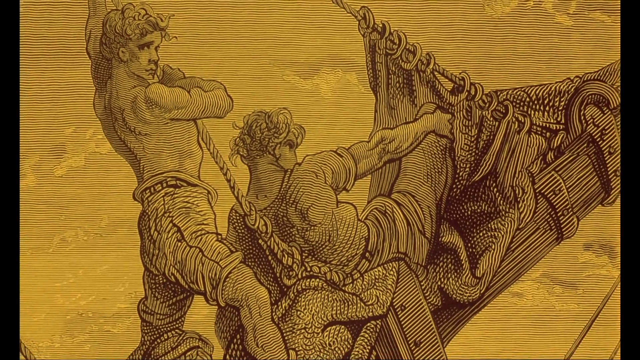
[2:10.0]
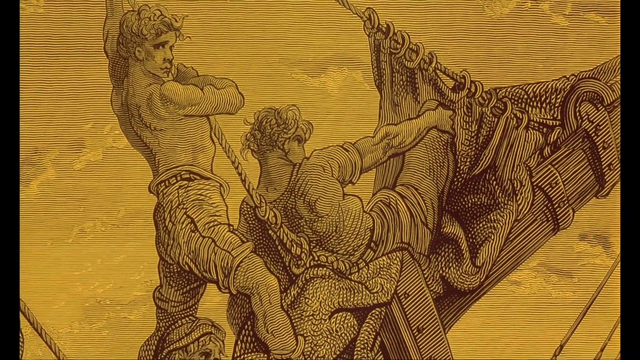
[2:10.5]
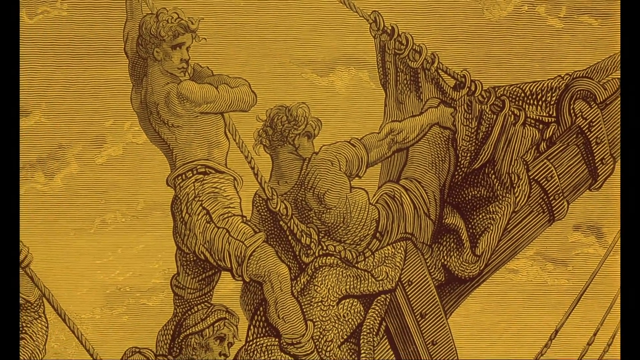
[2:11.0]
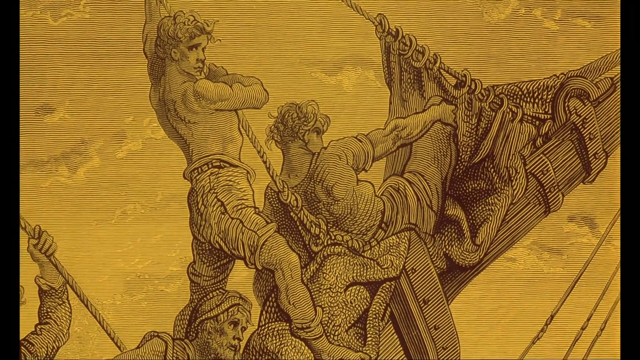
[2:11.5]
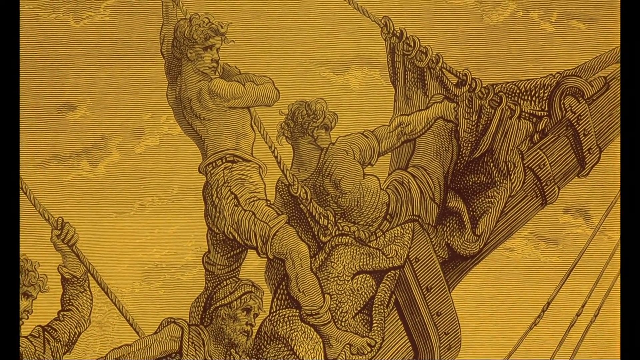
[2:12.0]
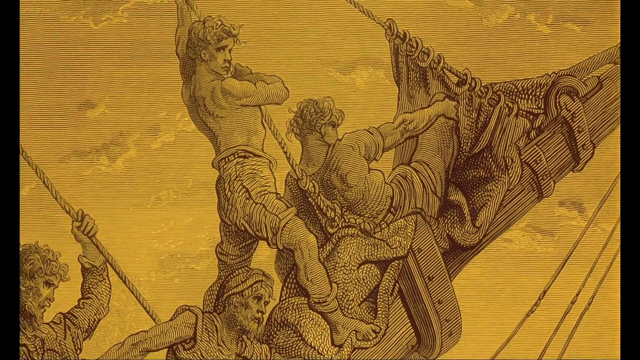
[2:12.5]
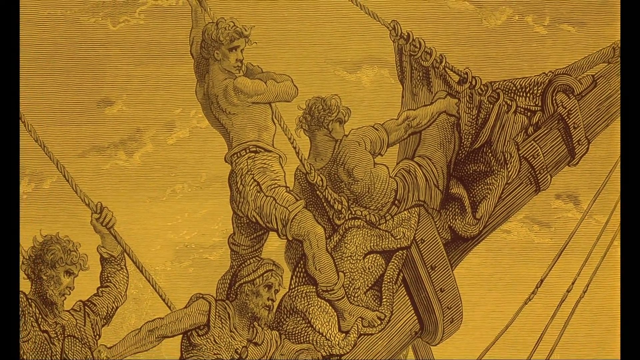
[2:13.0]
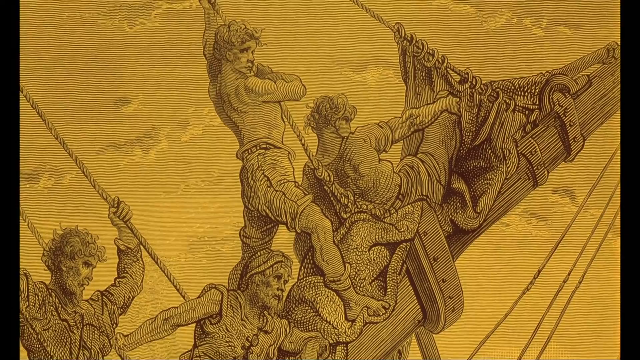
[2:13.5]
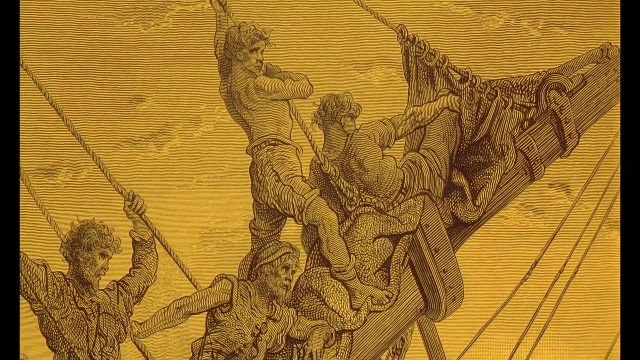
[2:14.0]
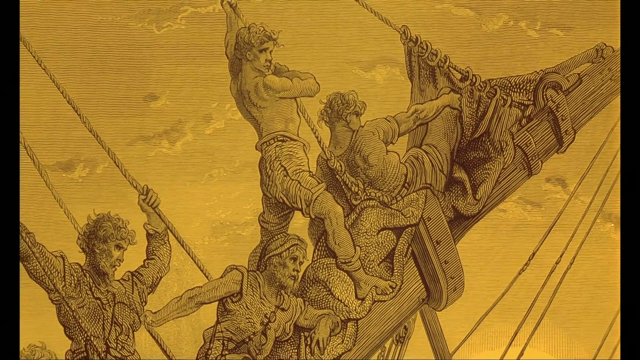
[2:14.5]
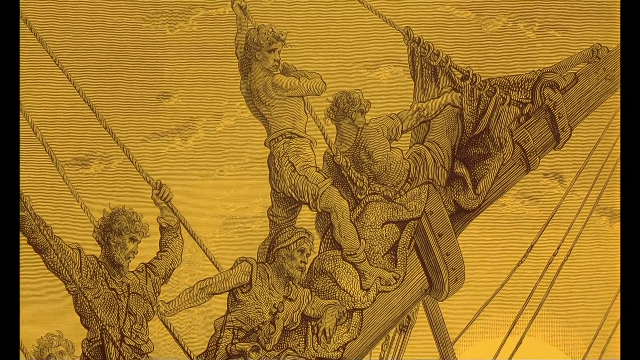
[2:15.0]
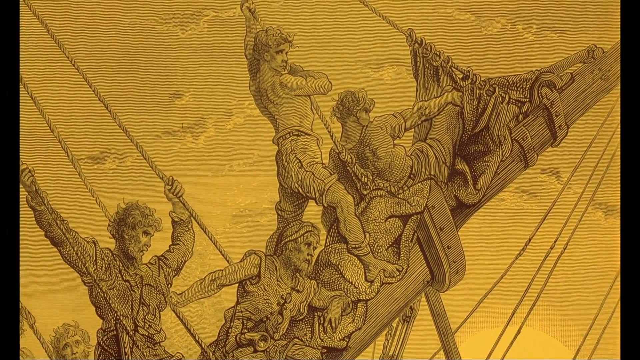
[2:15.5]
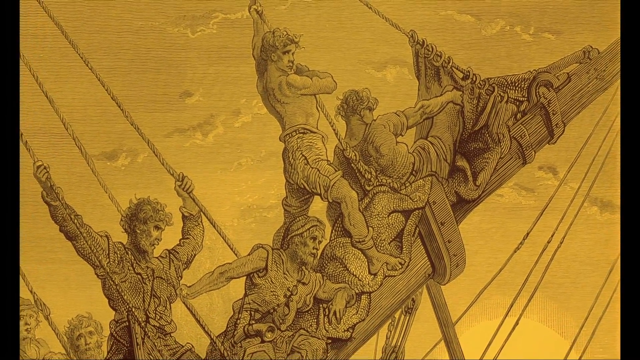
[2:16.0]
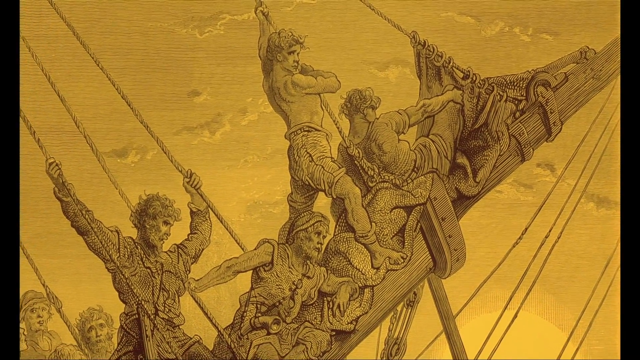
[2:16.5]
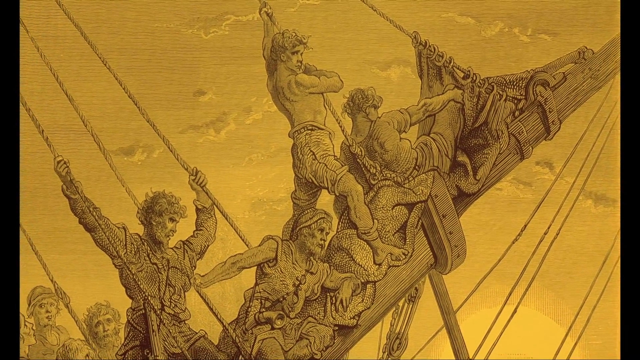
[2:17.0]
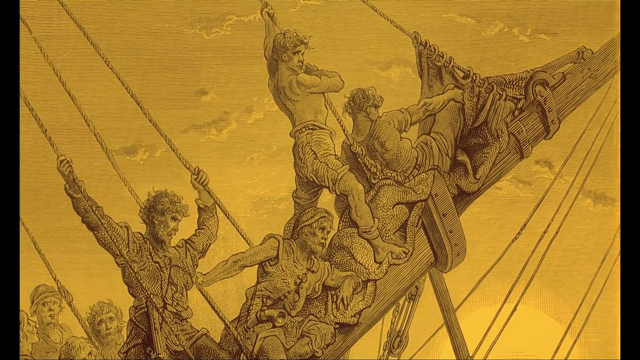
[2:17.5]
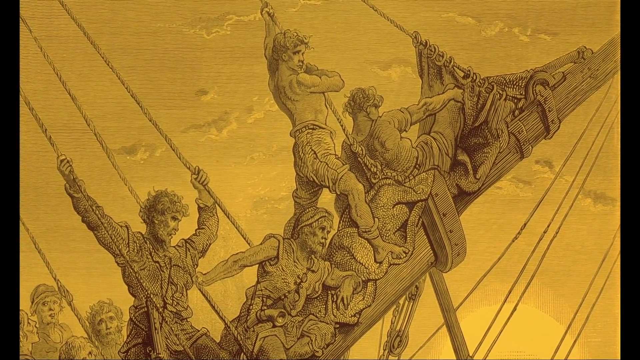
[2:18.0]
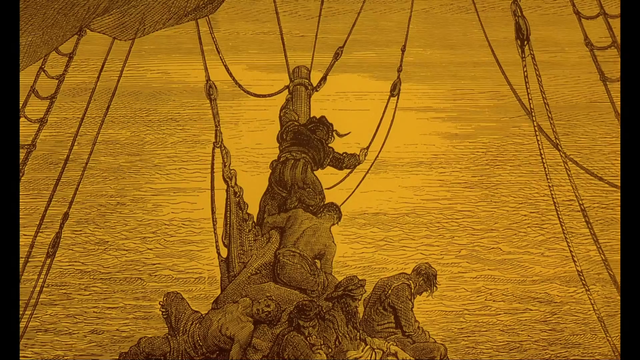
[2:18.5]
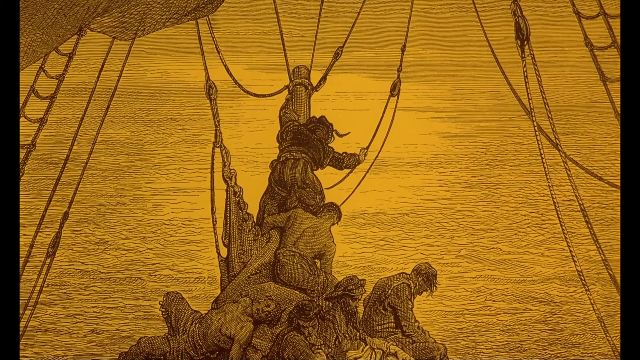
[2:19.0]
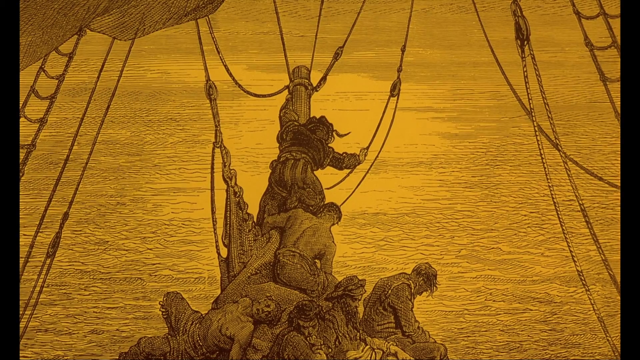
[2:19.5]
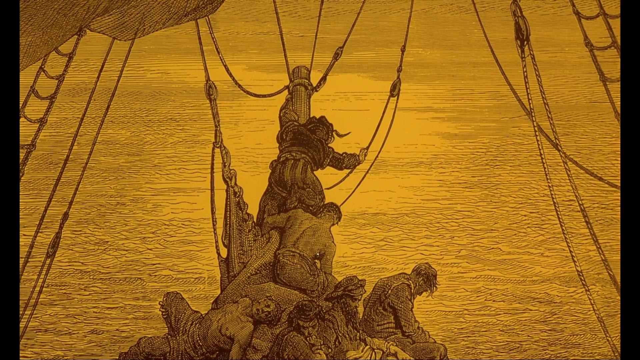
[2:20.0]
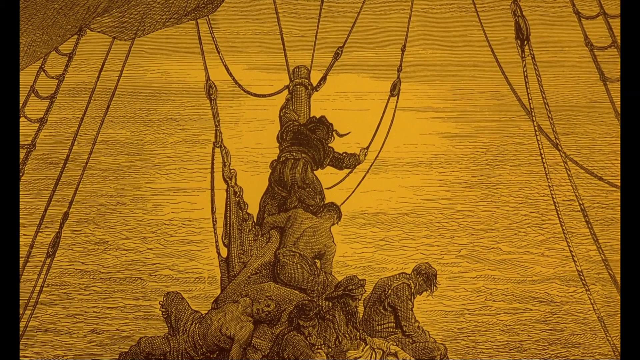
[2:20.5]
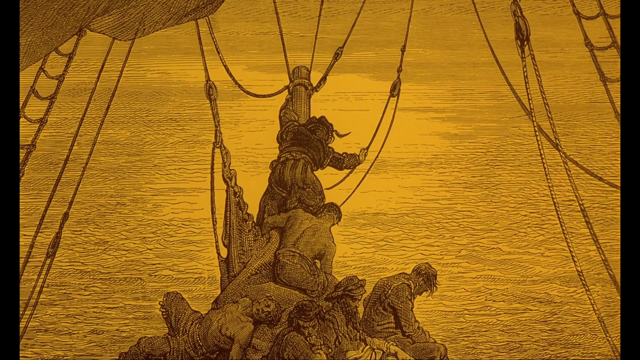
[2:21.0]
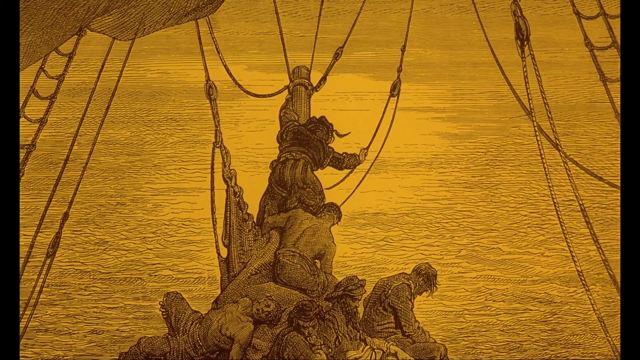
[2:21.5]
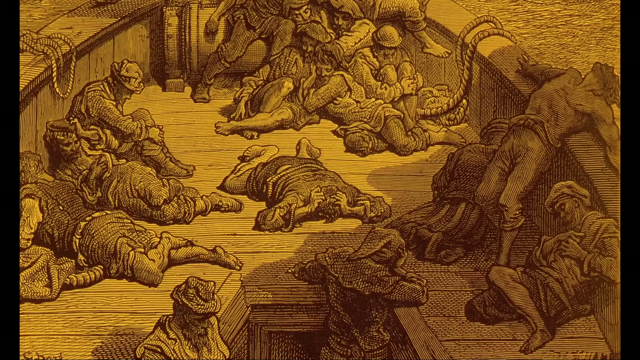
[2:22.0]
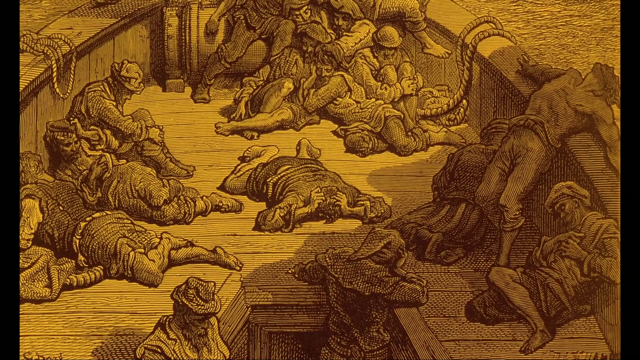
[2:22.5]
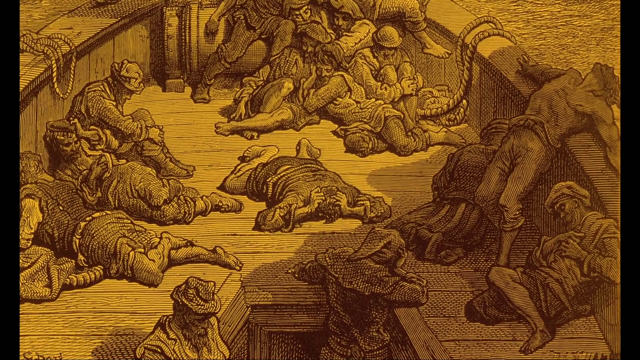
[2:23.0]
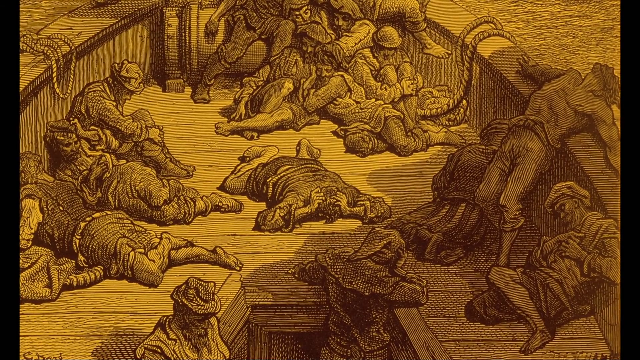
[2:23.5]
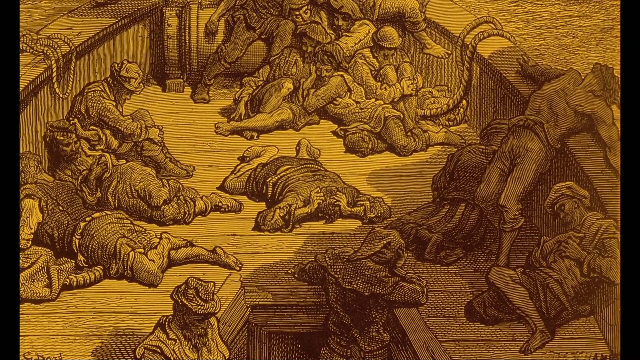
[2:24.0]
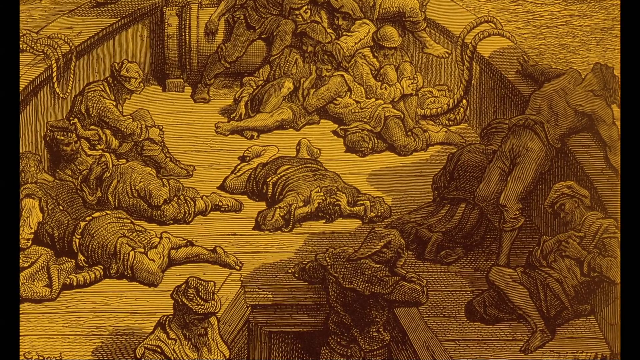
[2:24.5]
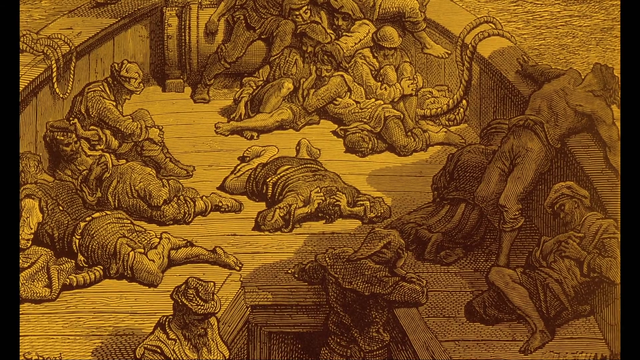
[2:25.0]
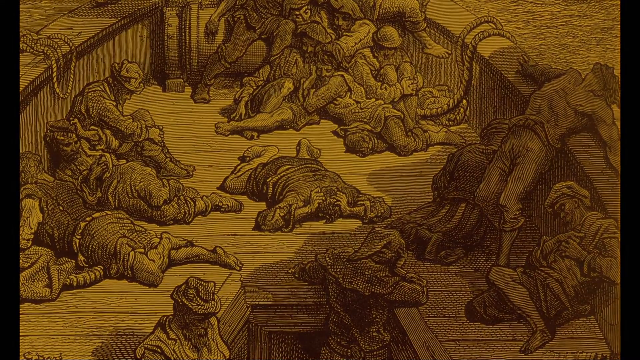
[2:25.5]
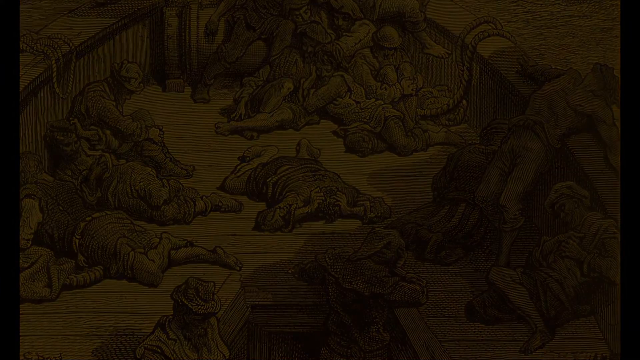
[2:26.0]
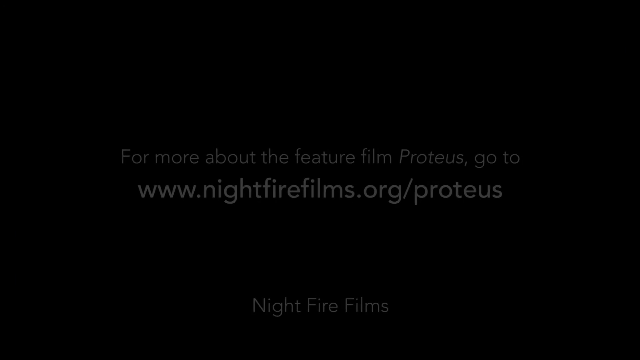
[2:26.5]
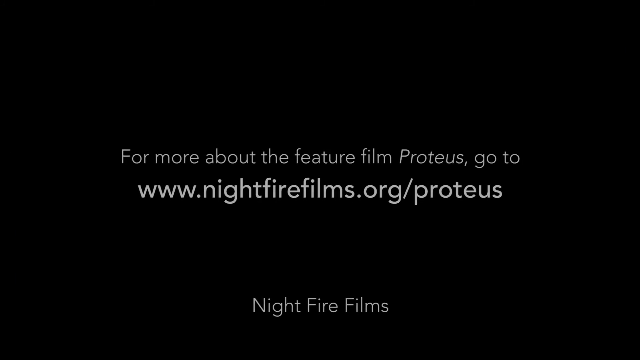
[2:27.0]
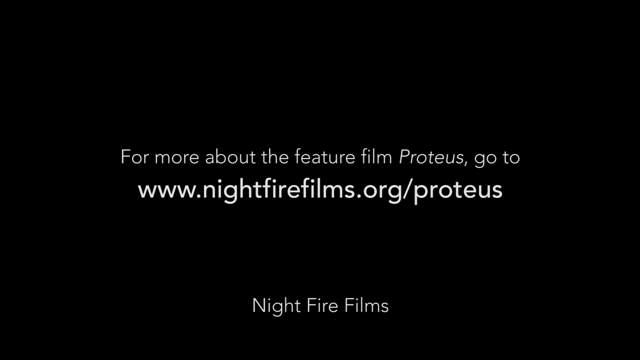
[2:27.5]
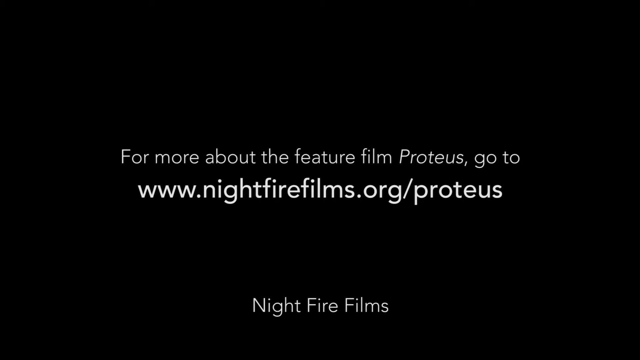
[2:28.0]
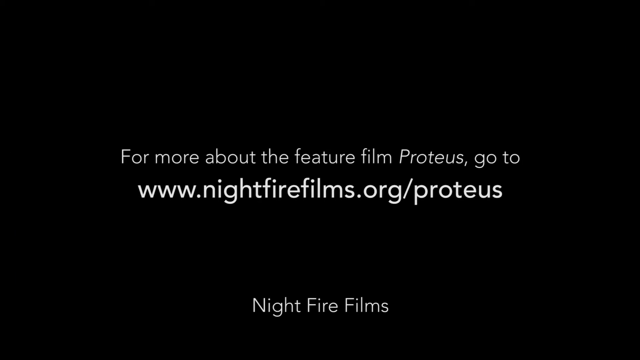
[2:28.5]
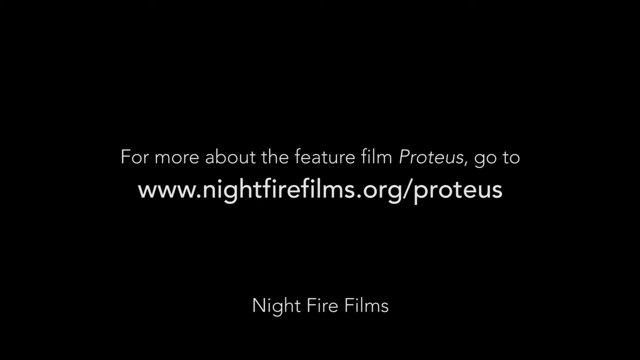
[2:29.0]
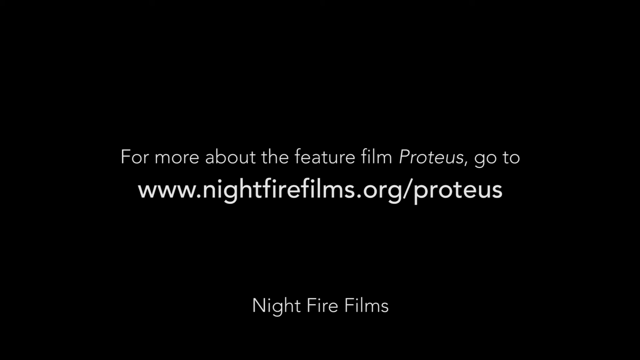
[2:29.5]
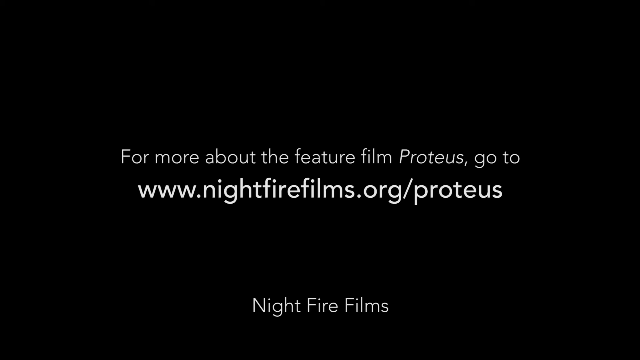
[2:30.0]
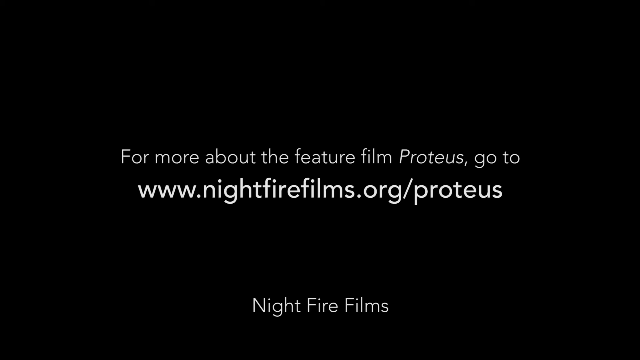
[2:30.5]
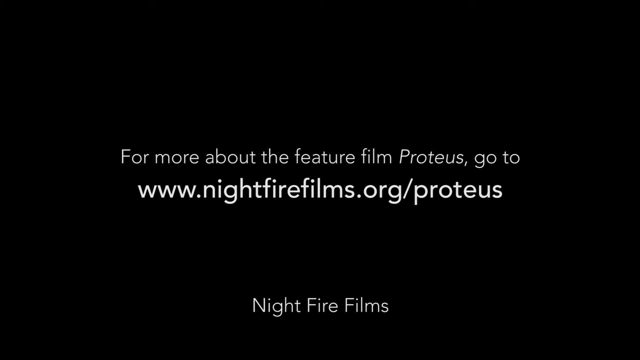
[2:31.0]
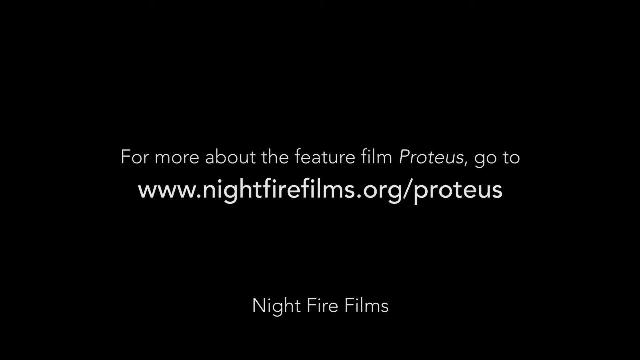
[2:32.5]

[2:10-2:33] Two men are shown on a part of the ship: the man on the right-hand side stands gripping onto the ropes, and the man in front of him sits on the sail. The camera zooms out, revealing more men holding on to the ropes of the ship. The scene transitions to a new yellow painting of men holding on to the boat, raising the sail. Next, men are shown lying on the ship, looking very distressed, sick, famished and exhausted. The scene fades to black, and words appear on screen reading "For more about the feature film Proteus, go to www.nightfirefilms.org/proteus", with "Night Fire Films" below. The lettering continues to fade in until it is completely solid, and the video ends.